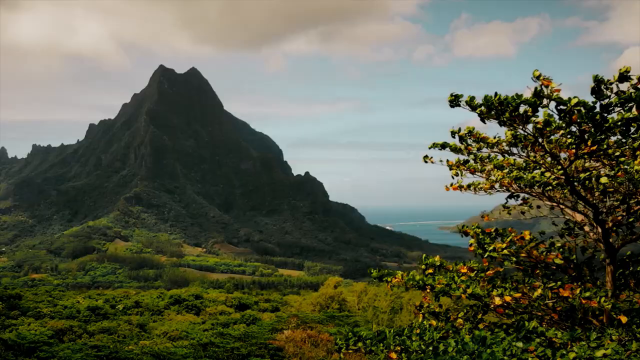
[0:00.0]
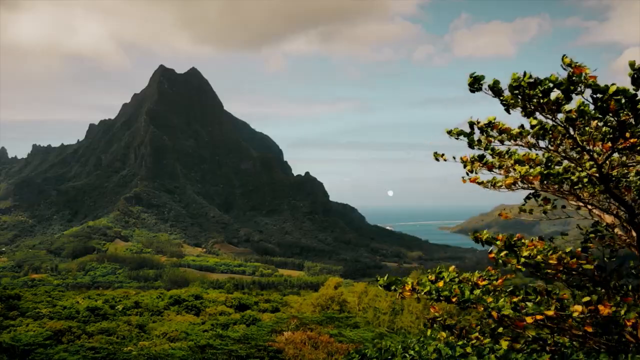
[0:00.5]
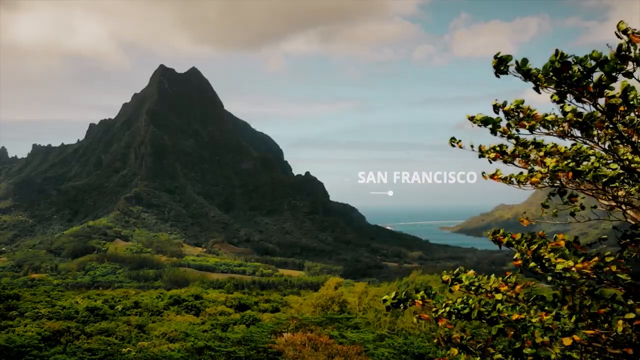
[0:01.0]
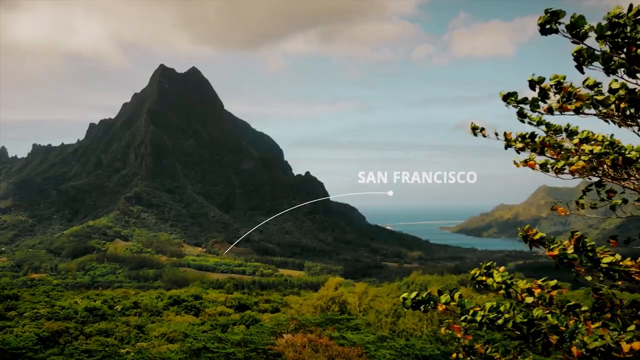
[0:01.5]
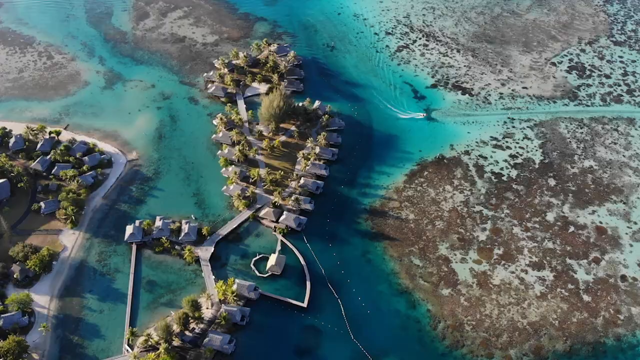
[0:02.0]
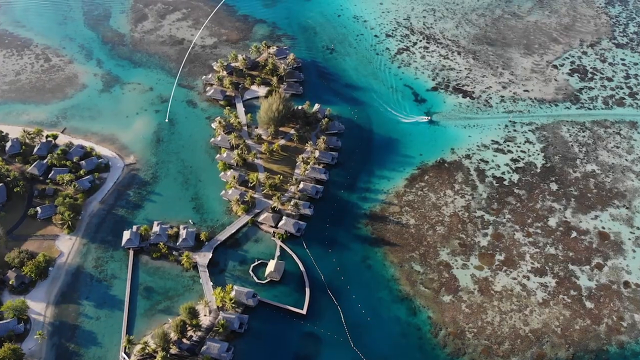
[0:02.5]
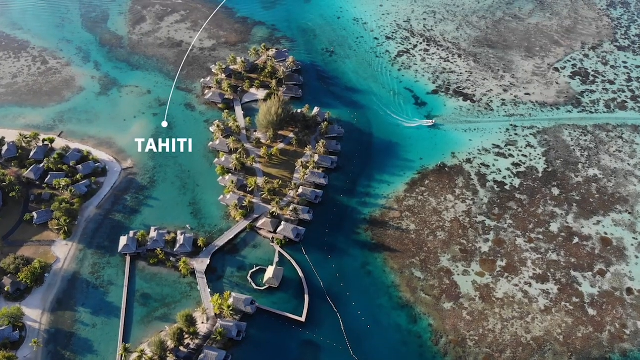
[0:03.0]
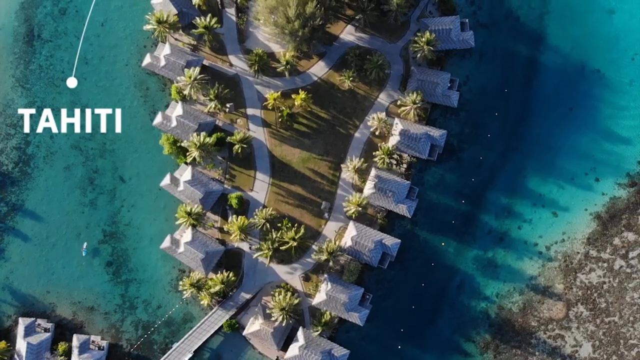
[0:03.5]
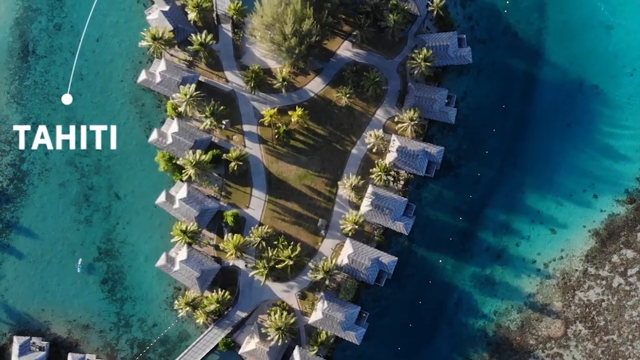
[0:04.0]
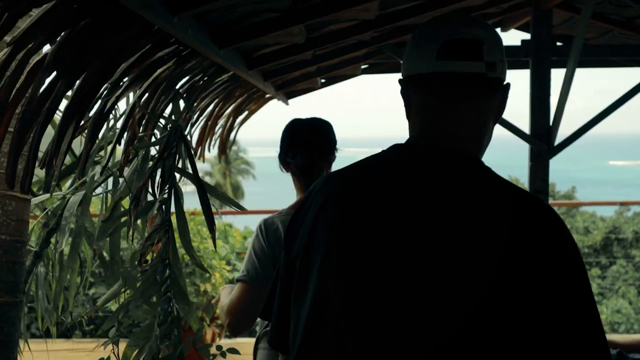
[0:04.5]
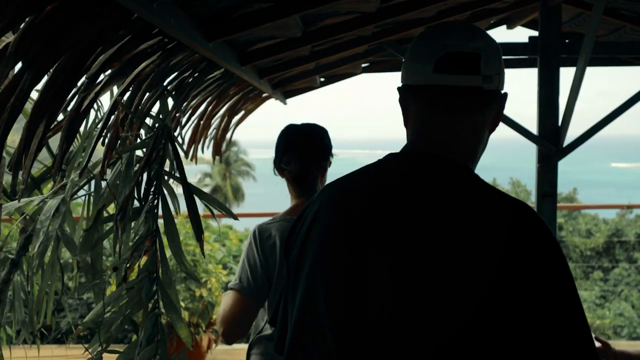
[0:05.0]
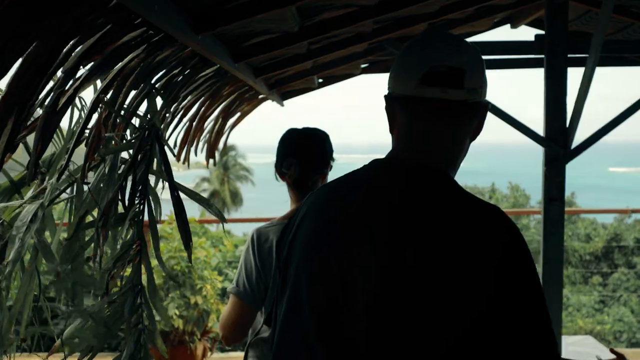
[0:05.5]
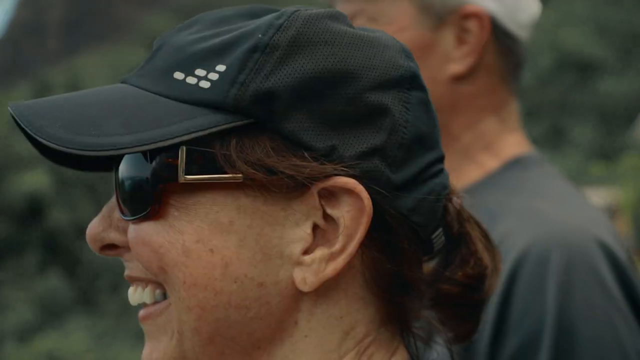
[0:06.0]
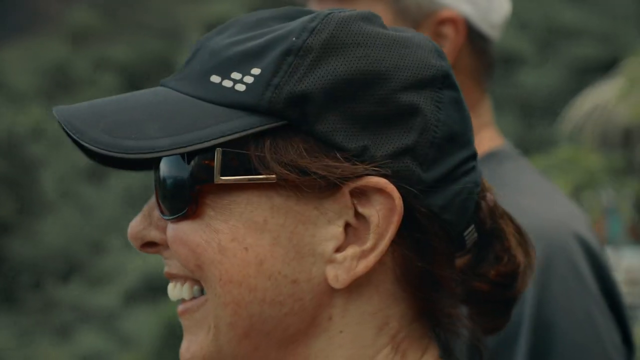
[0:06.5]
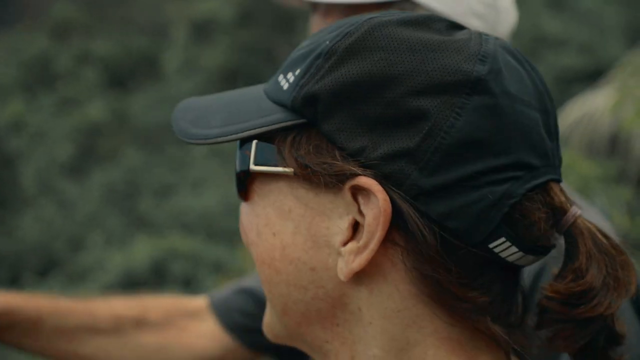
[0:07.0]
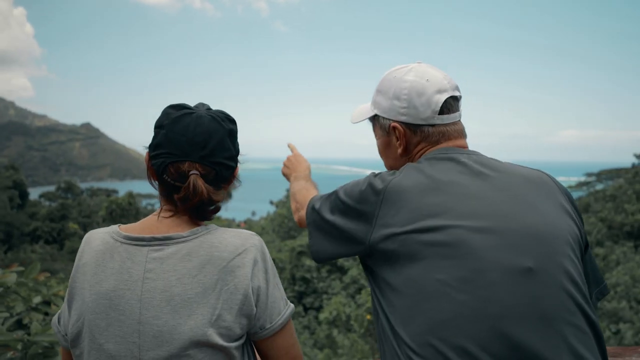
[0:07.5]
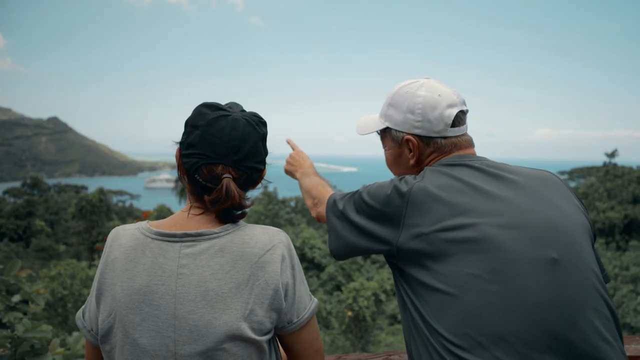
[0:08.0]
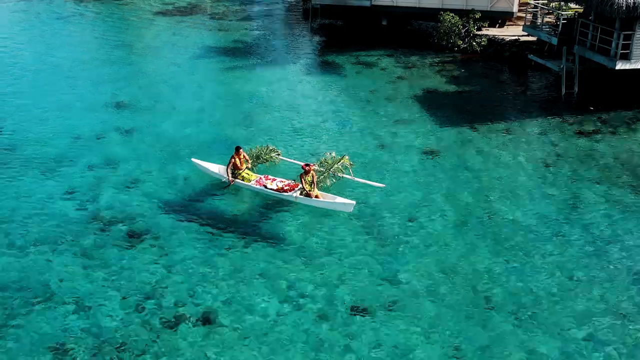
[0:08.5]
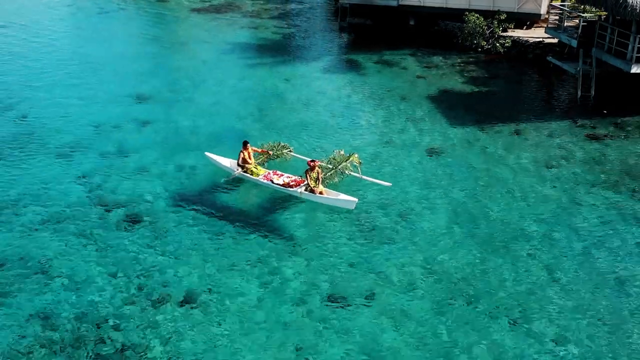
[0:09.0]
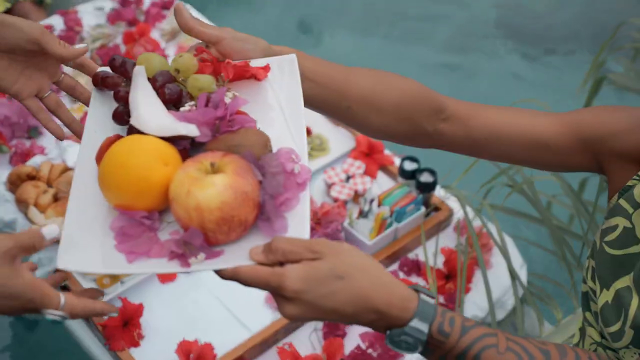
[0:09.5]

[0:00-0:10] Green and yellow grass or trees cover the ground next to a tree that is also yellow and green, under a blue sky with white clouds. The camera moves forward past the tree, and white text reads "San Francisco." A white line with little circles connected to it moves downward. The scene transitions to what looks like an island, with a boat in the water and some beach or island houses, and text reads "Tahiti." Close-up shots show some of the houses in Tahiti. In another scene, a man and a woman walk in slow motion. Then they are together; the woman wears sunglasses and a black hat and smiles. She turns toward the man, who is pointing. A white boat with two people in it floats on crystal clear blue water. A platter of fruit appears, and a woman hands the platter to another woman.